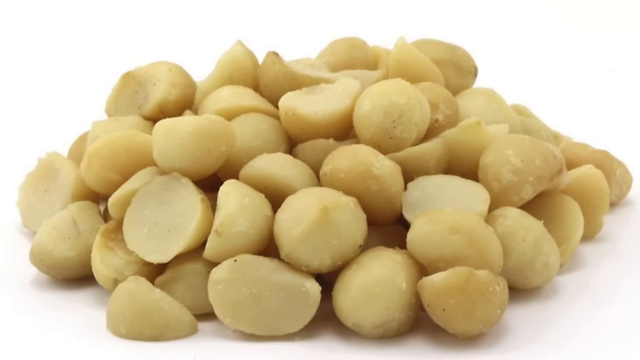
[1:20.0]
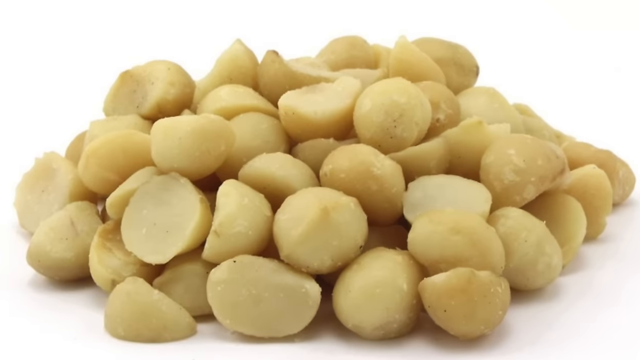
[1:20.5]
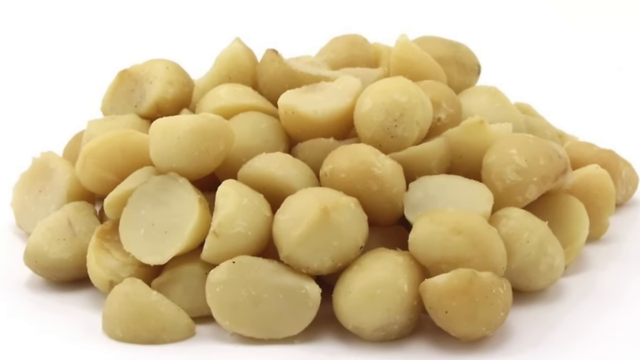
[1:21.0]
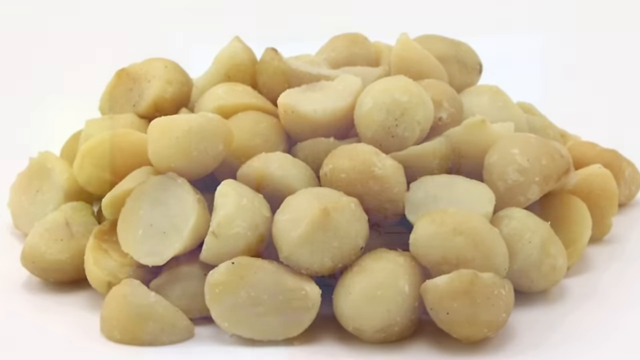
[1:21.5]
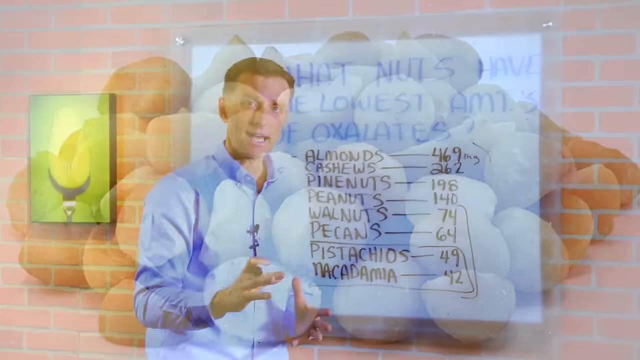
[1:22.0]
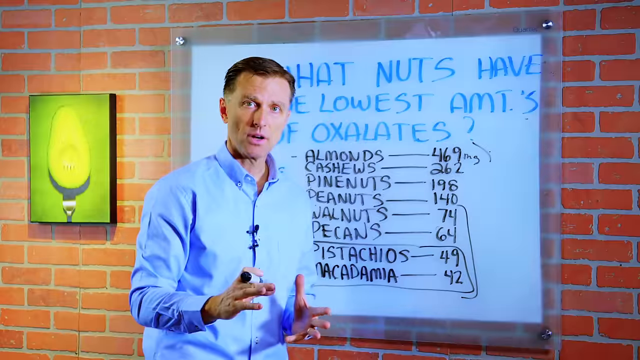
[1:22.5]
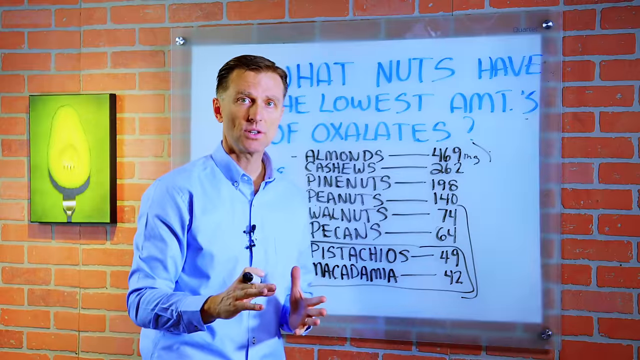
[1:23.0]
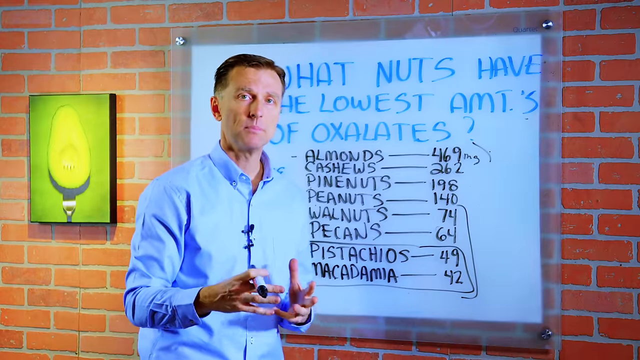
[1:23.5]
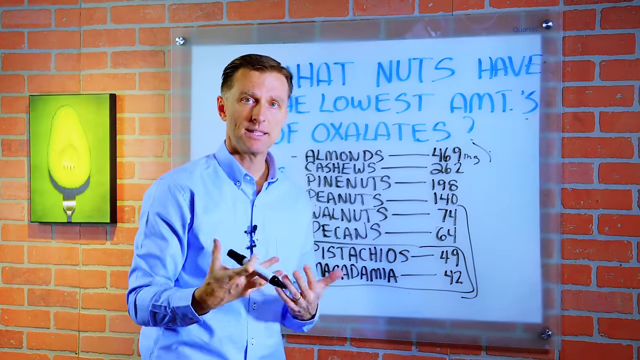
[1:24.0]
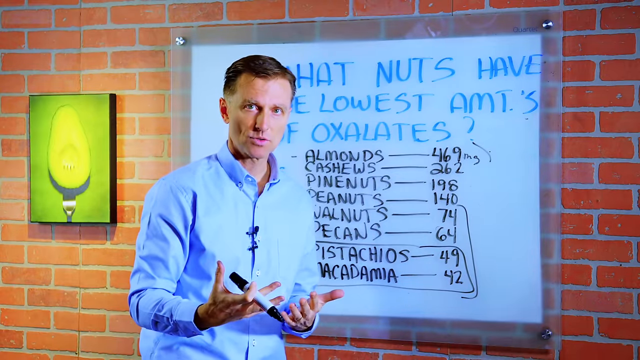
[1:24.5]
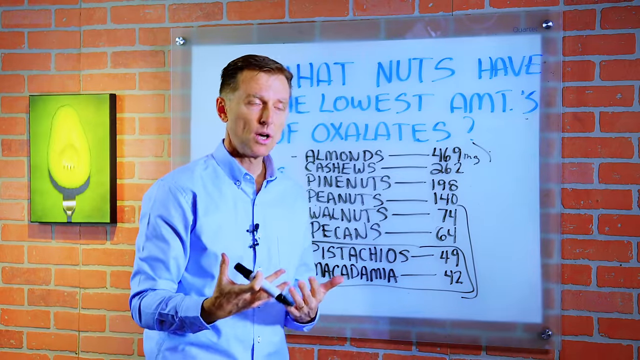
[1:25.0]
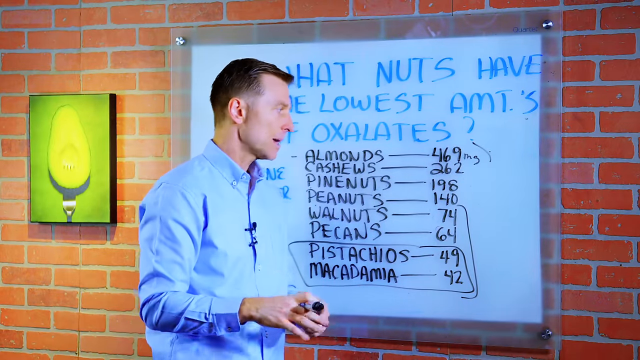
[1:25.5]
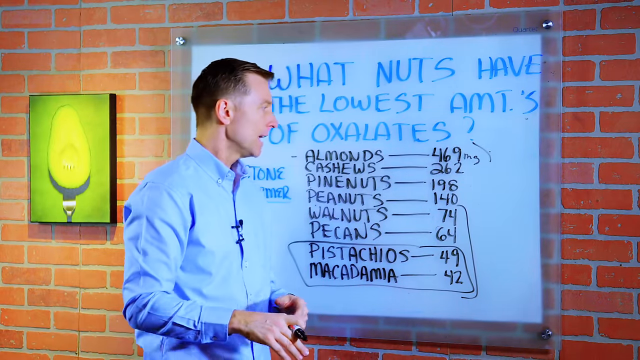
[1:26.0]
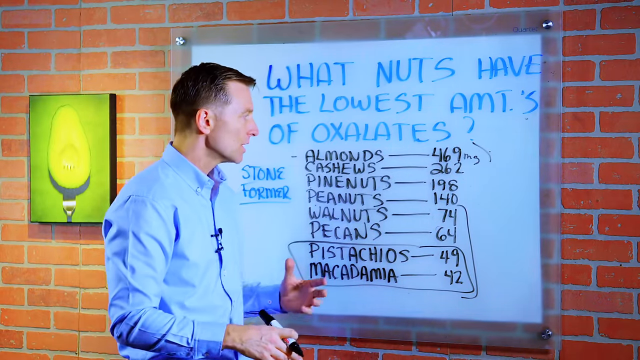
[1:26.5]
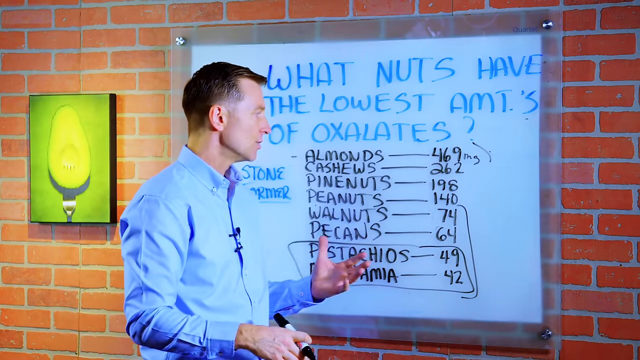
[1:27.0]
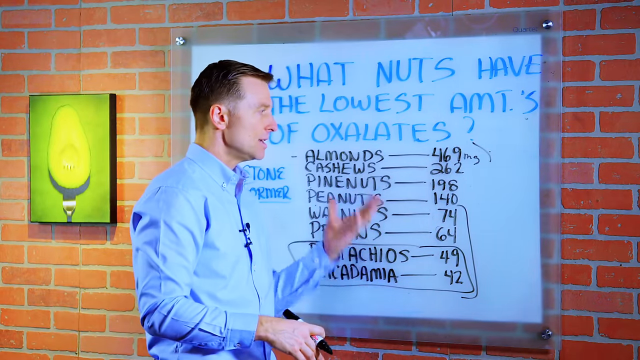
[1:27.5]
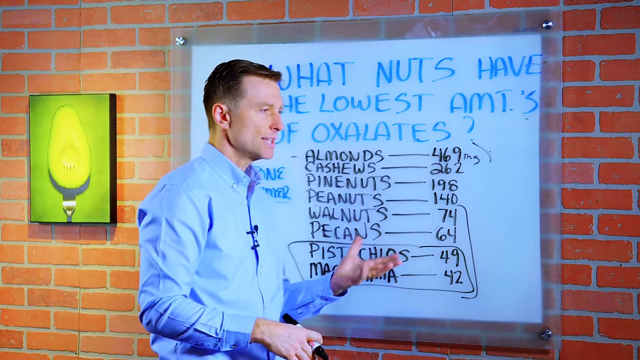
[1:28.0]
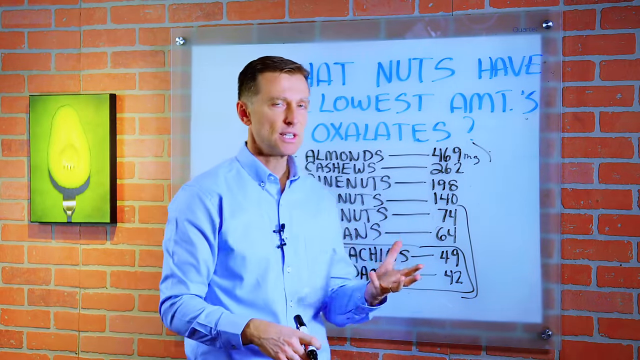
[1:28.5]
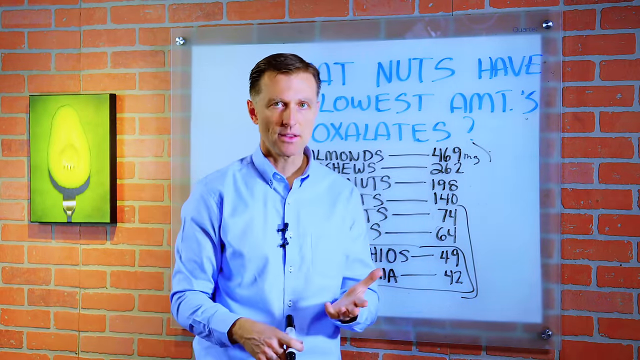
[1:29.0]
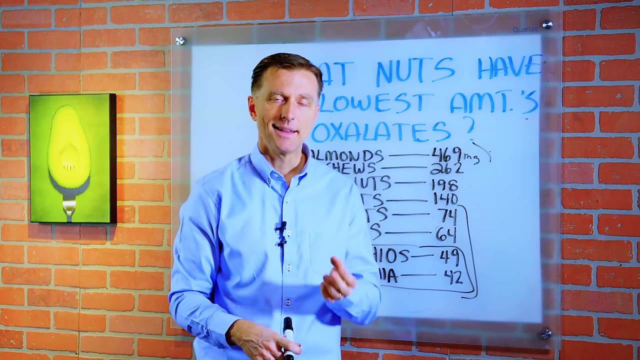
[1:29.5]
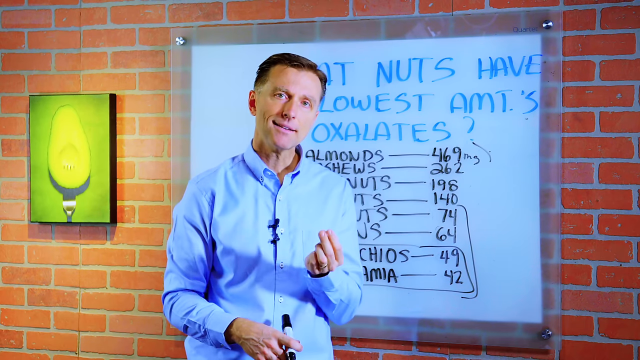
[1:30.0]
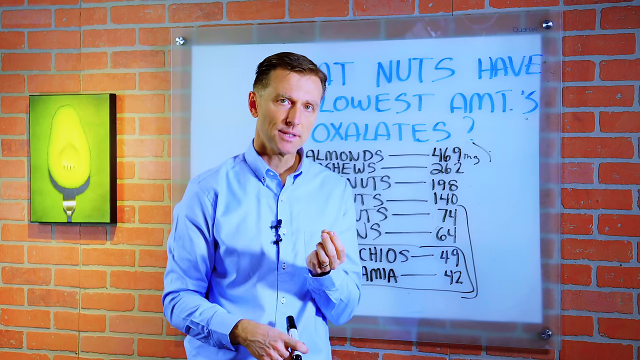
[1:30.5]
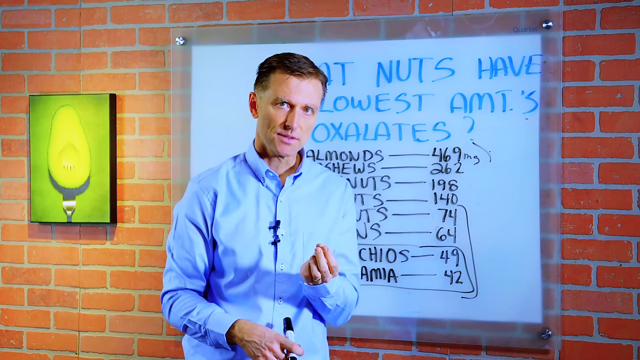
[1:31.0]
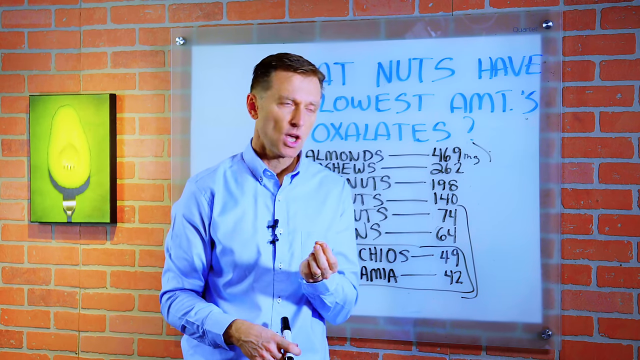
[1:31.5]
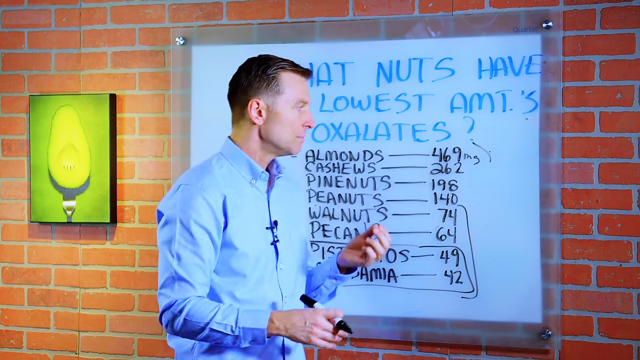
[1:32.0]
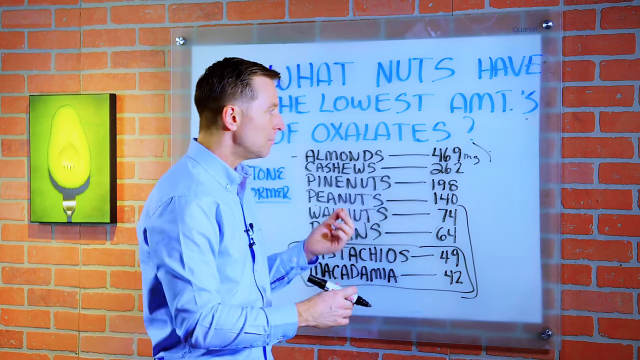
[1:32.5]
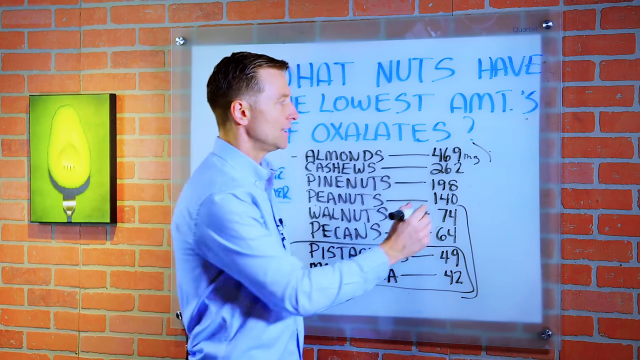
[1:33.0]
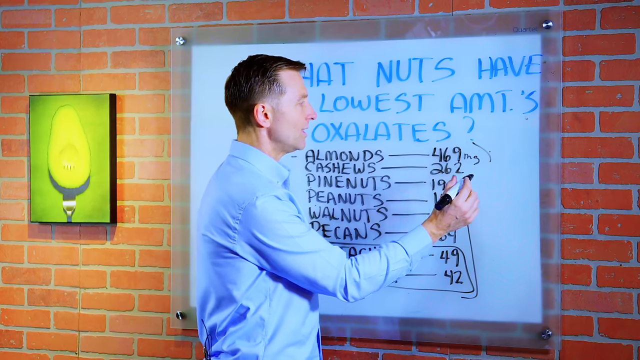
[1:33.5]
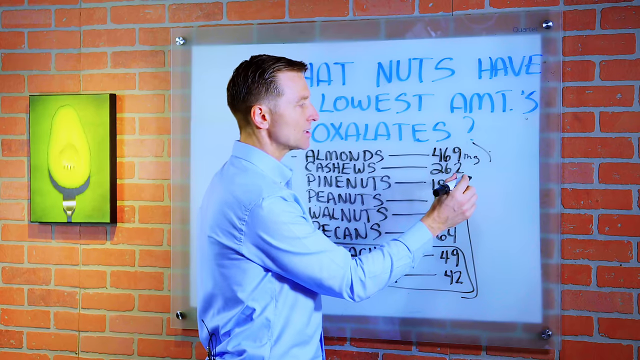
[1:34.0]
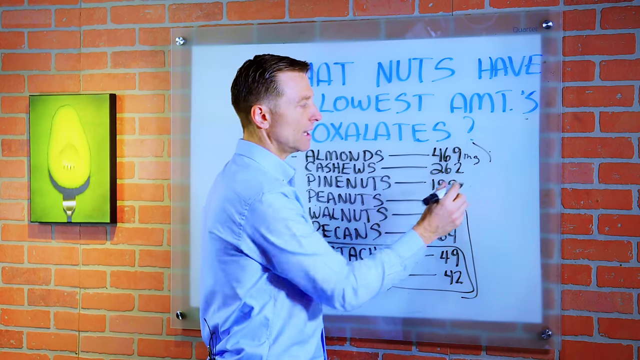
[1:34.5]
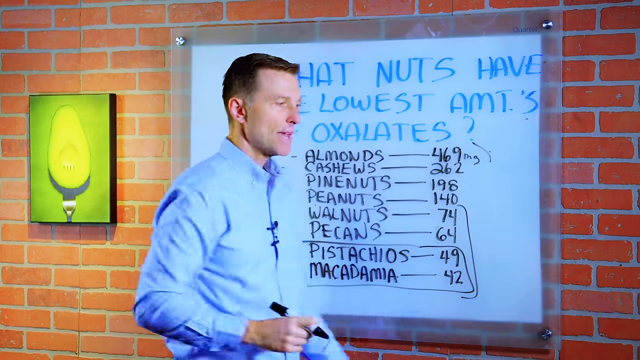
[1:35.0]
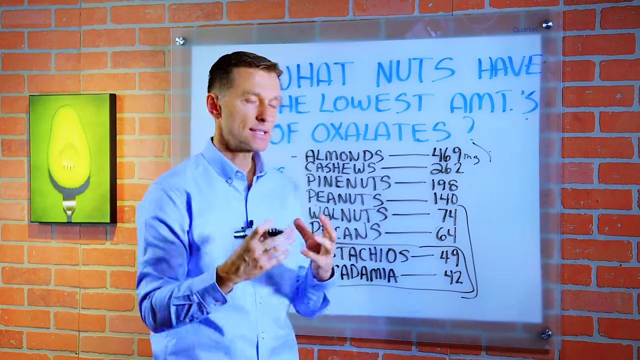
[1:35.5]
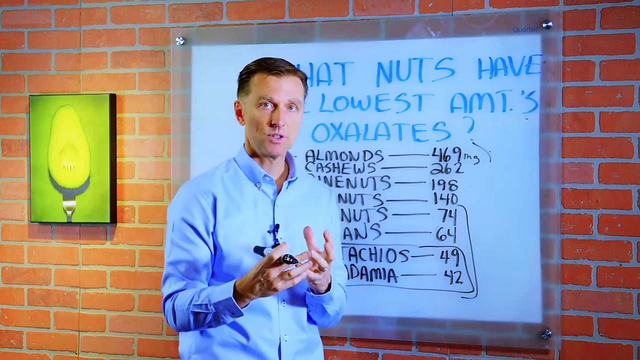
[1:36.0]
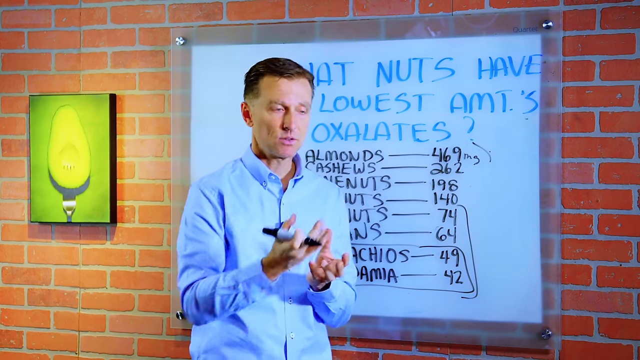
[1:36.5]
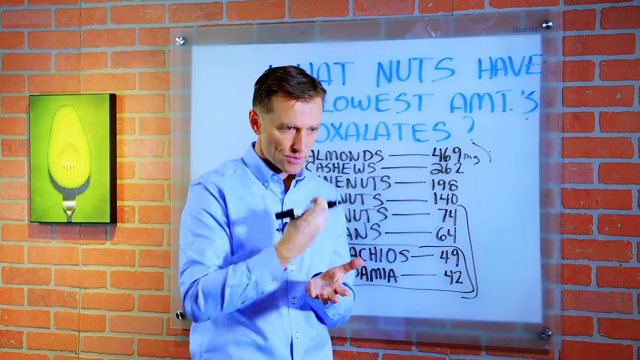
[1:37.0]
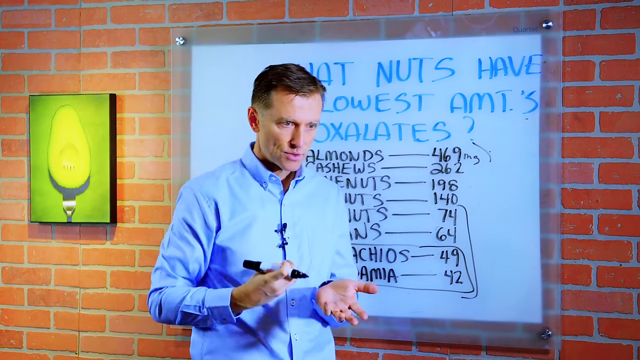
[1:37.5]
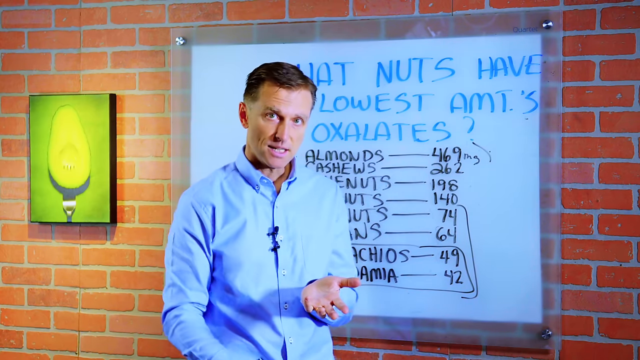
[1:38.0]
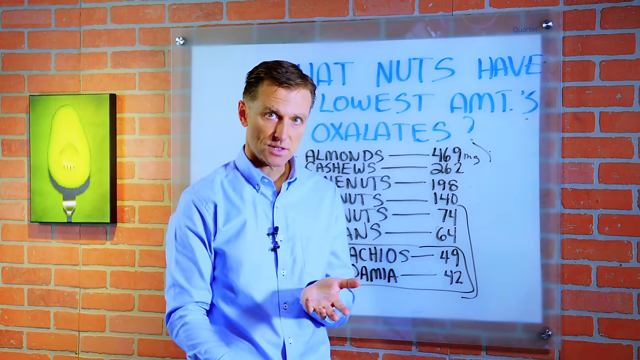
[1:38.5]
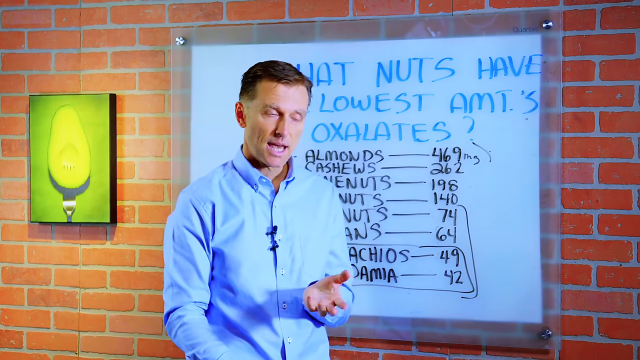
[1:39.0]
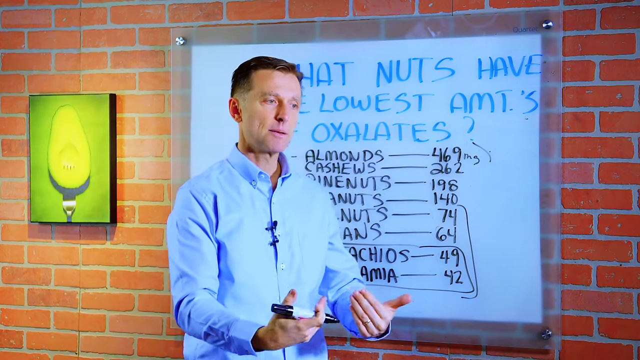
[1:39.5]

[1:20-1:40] A close-up shot shows peanuts. The video then returns to the board listing milligrams of oxalates in almonds, cashews, pine nuts, peanuts, pecans, pistachios and macadamia, with the doctor beside it. Pistachios and macadamia become highlighted. The scene is filmed in a studio.